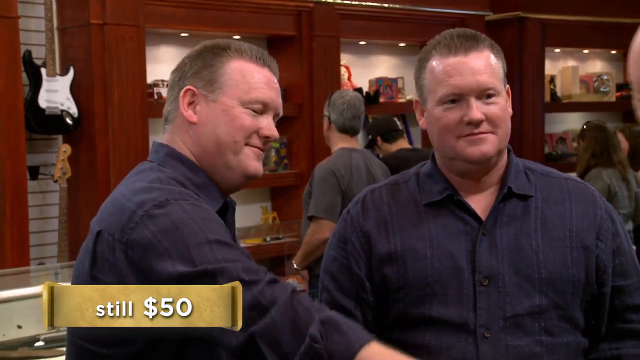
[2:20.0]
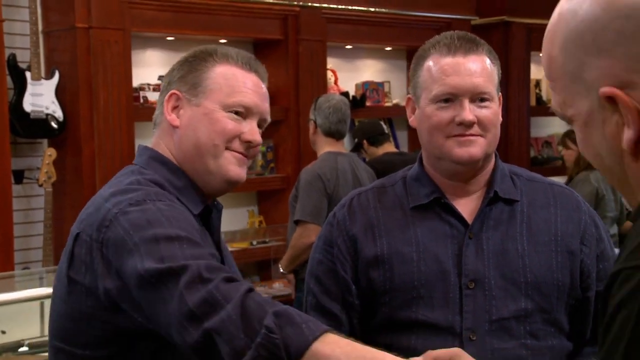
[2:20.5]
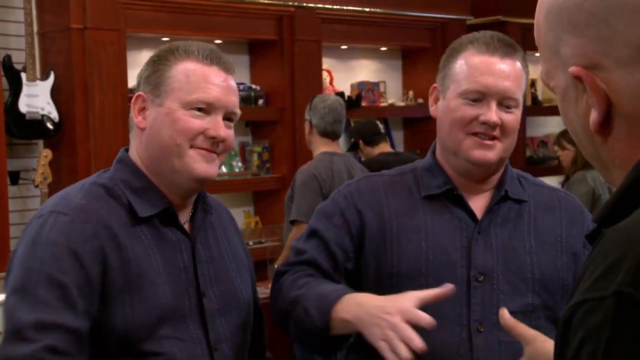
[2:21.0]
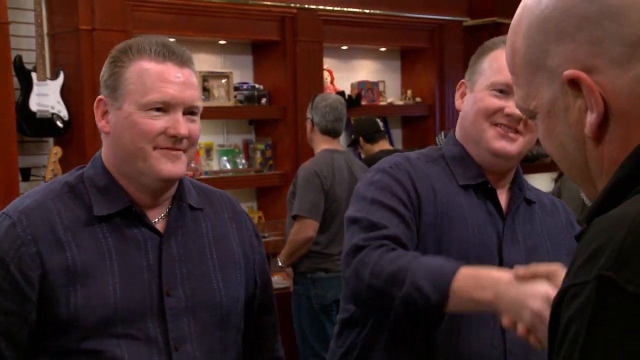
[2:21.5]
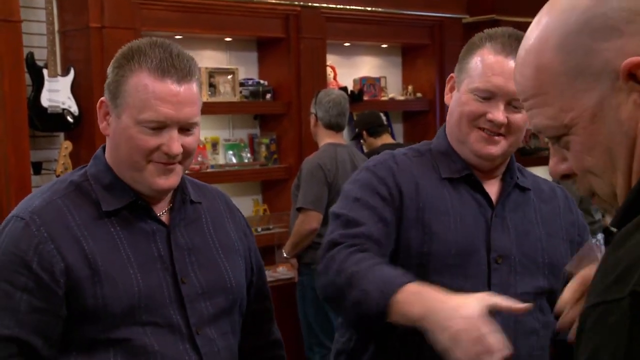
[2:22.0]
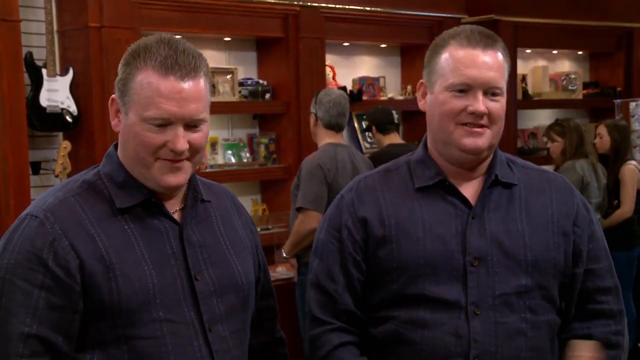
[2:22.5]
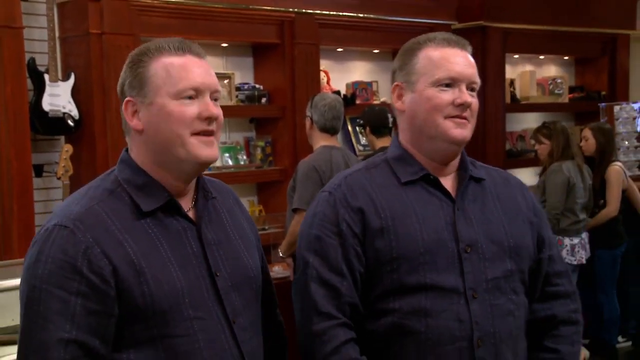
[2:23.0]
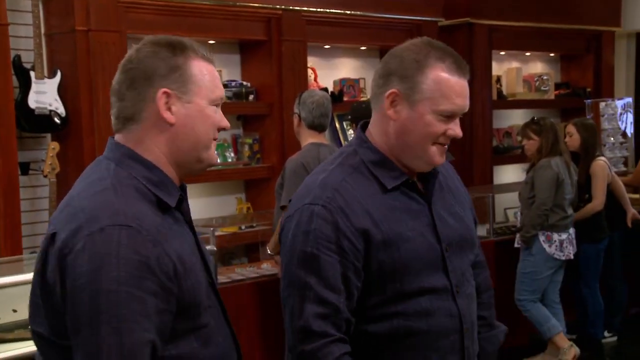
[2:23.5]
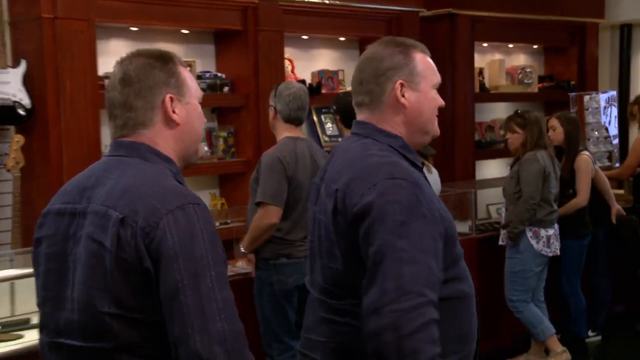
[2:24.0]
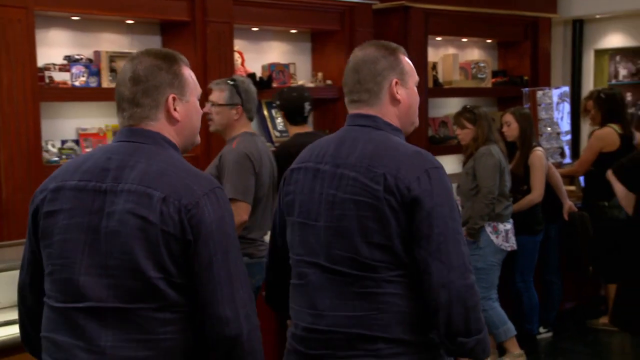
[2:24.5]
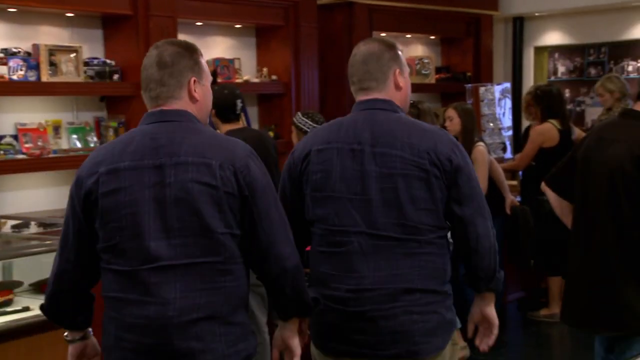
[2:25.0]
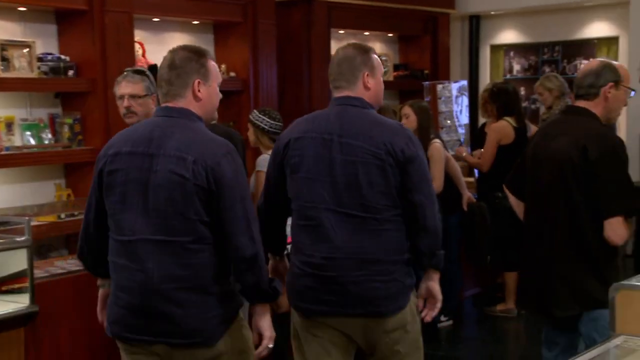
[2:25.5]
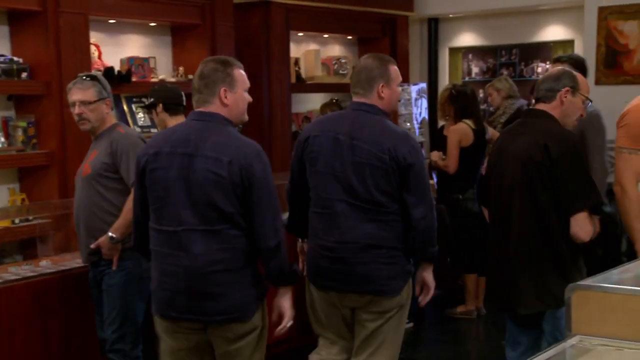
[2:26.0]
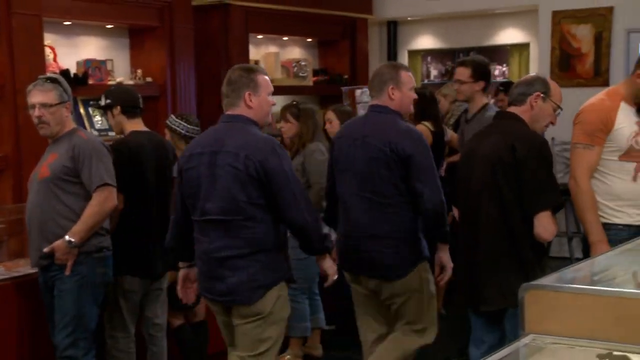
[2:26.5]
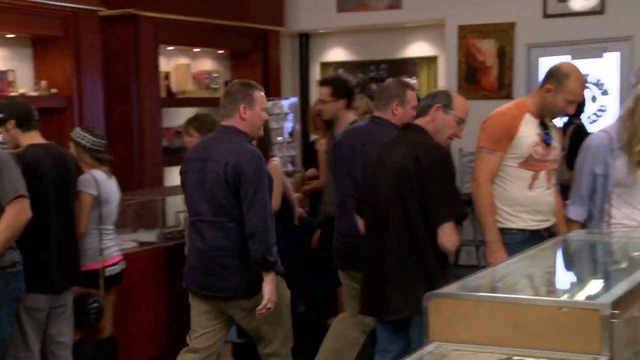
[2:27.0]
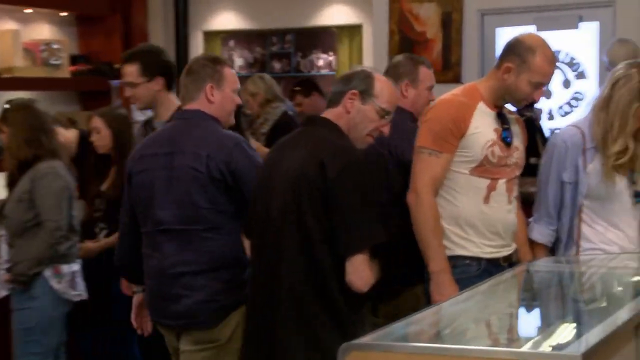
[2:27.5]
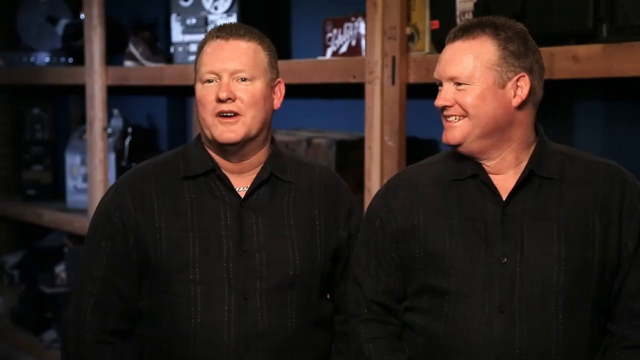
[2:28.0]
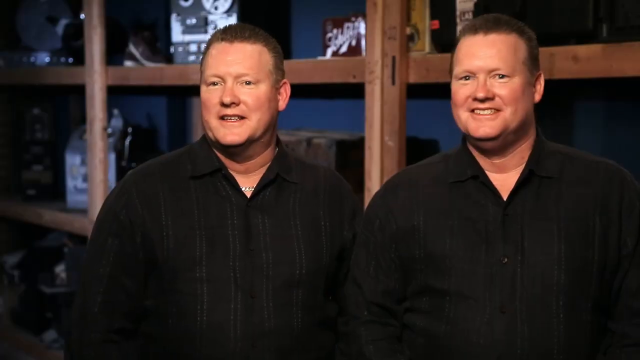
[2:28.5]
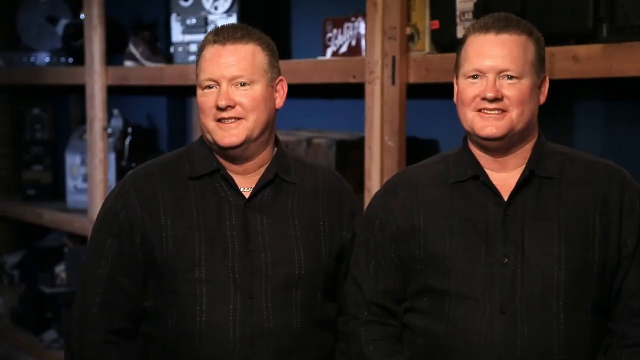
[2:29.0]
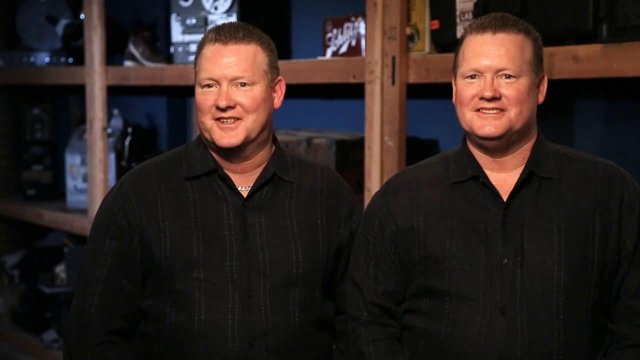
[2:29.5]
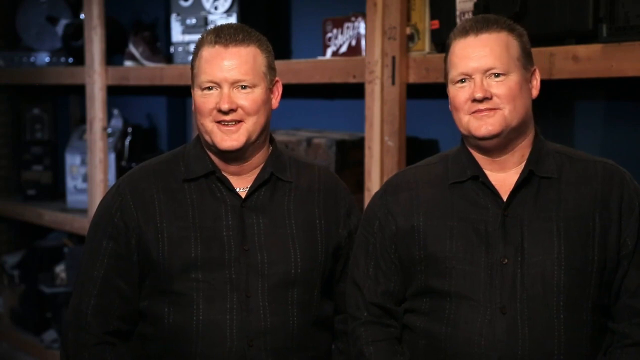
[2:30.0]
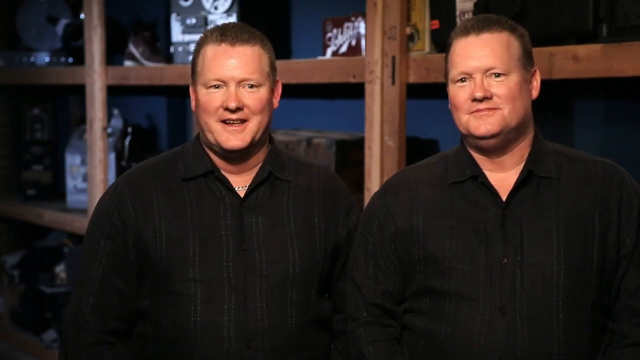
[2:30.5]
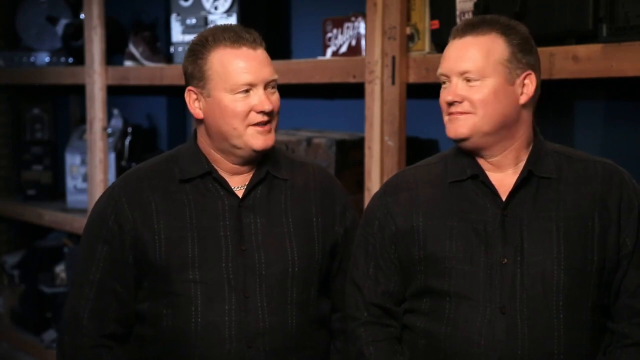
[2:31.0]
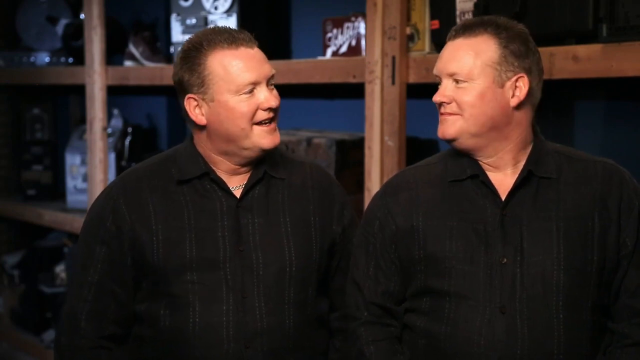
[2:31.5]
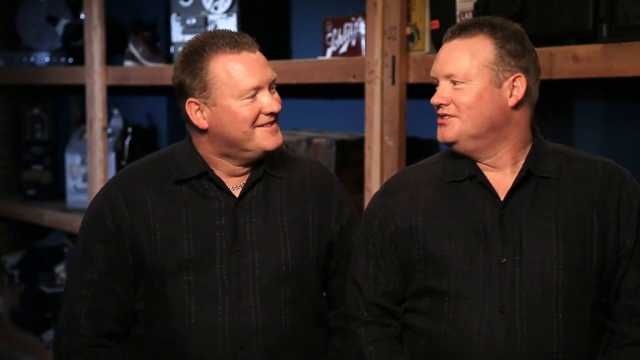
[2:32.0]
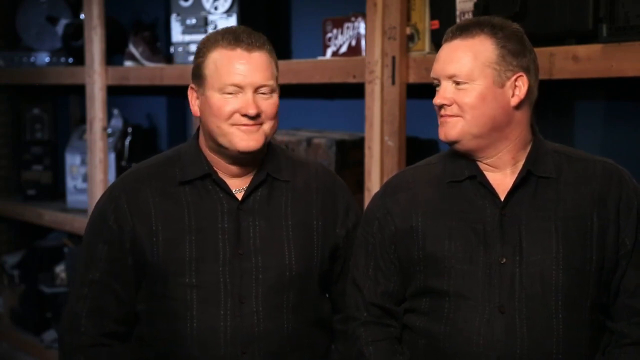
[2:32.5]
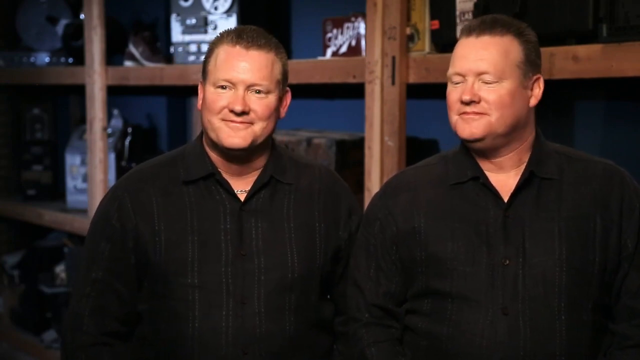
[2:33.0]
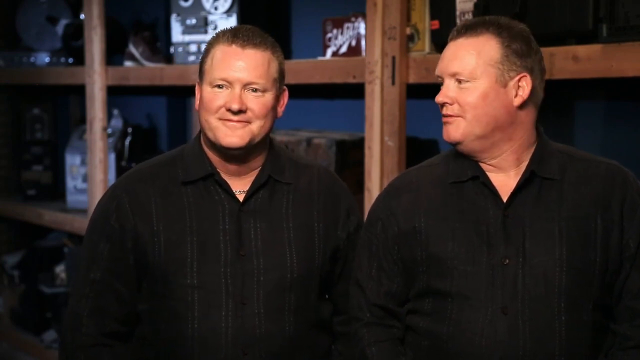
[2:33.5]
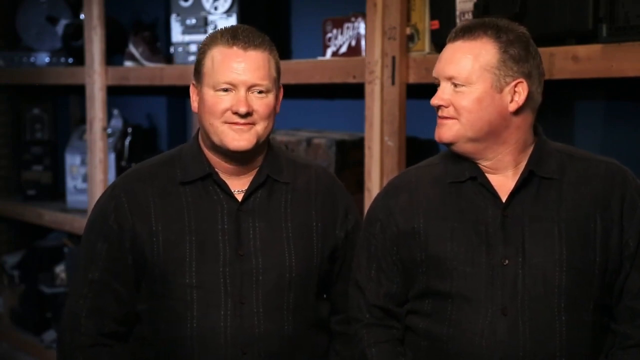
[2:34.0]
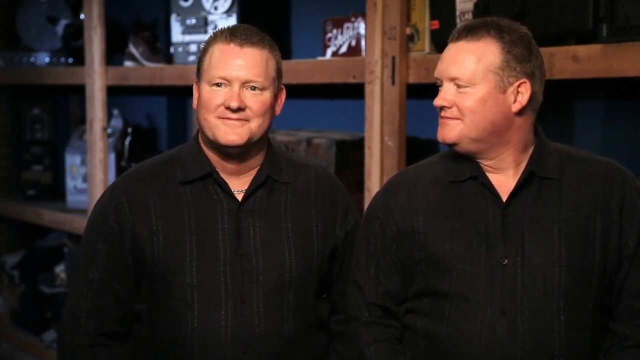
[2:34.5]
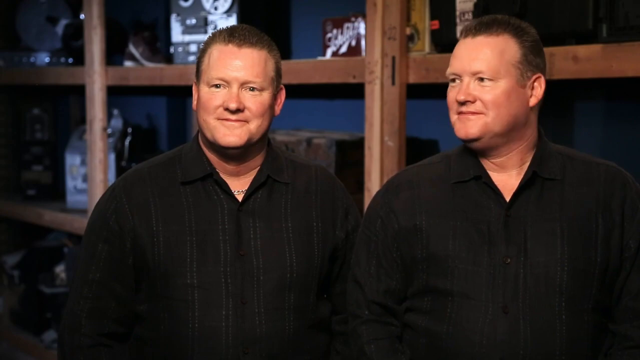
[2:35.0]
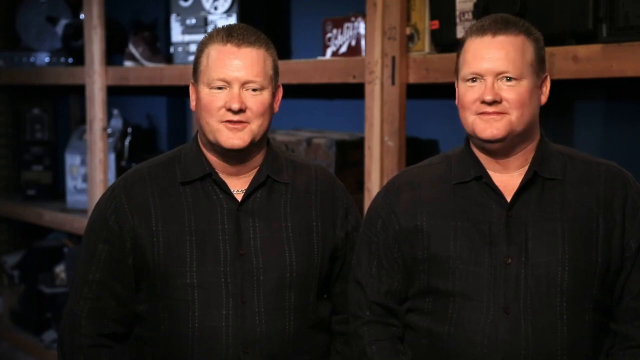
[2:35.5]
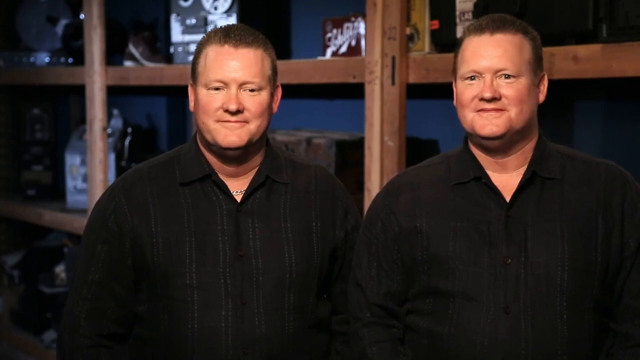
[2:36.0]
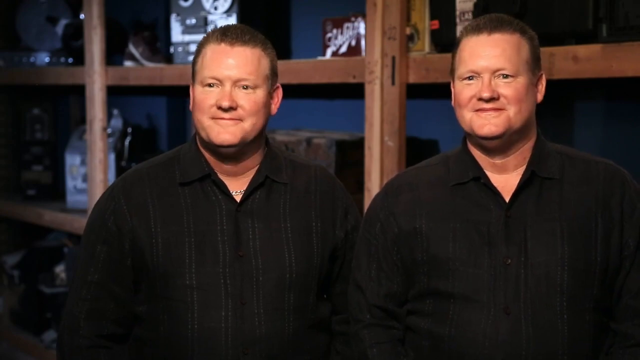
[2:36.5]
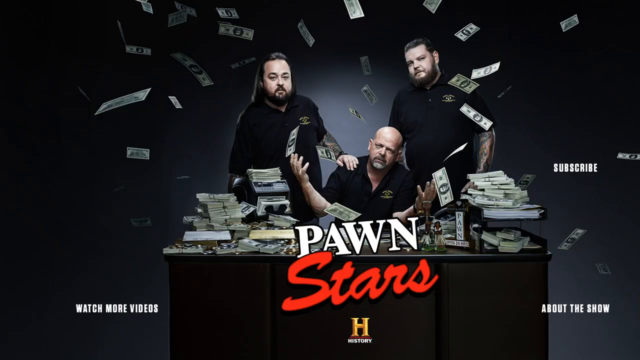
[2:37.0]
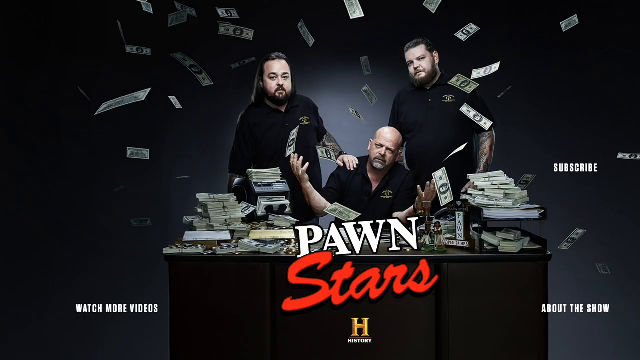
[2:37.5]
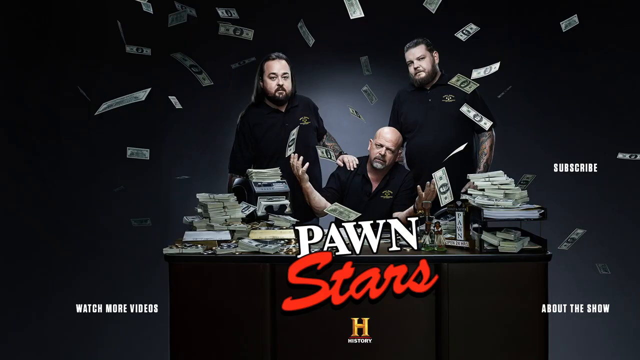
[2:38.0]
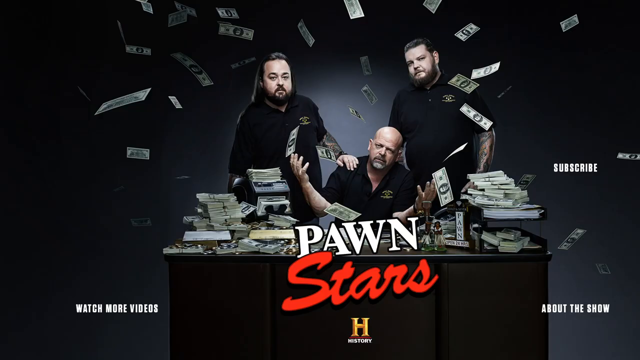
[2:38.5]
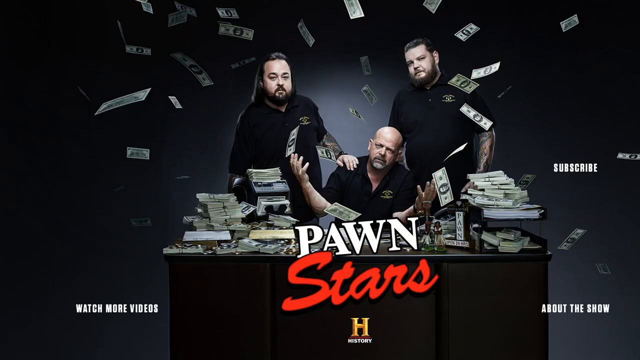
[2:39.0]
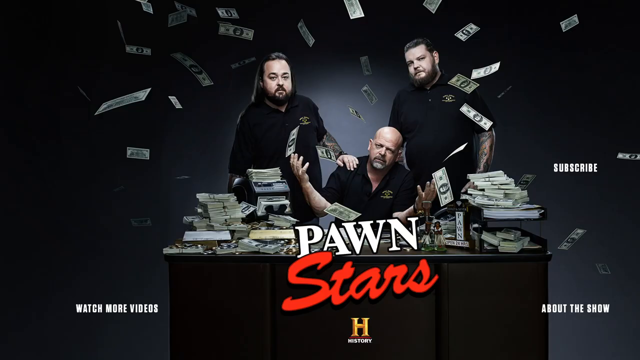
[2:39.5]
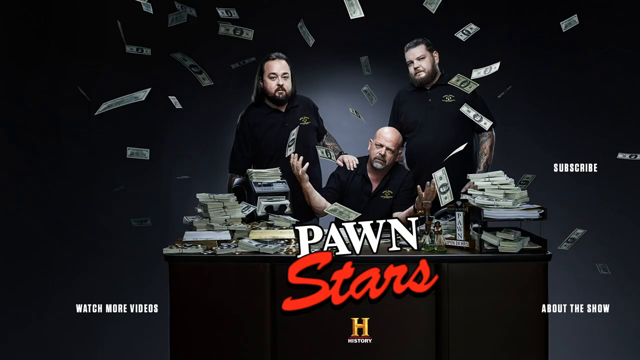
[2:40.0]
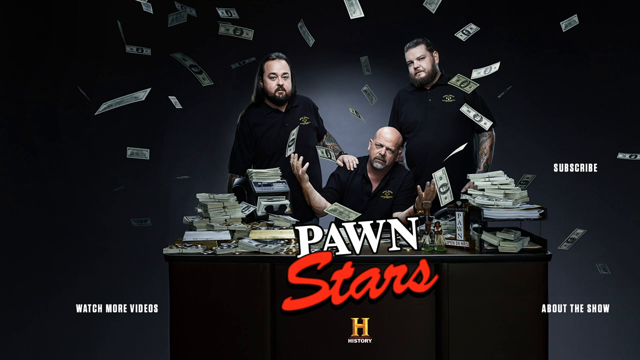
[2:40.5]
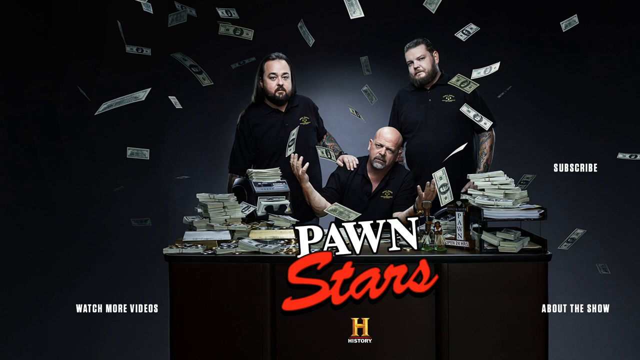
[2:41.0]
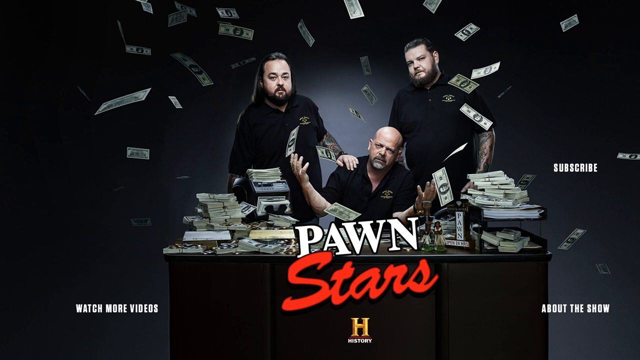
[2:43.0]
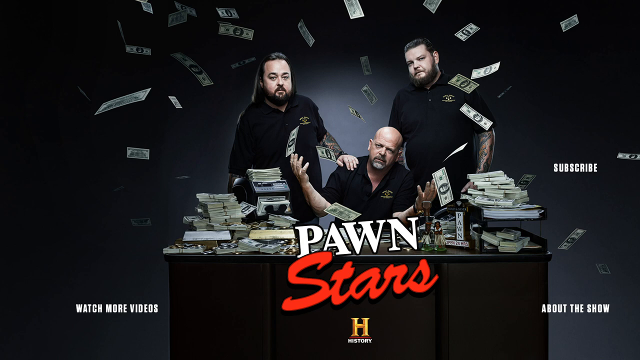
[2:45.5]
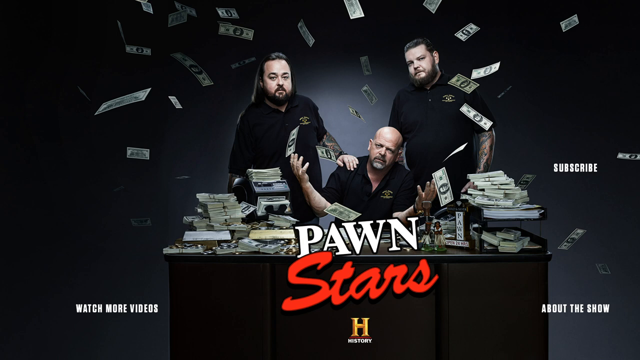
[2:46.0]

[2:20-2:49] One of the brothers shakes hands with the bald man in the short black shirt, and then the other brother shakes hands with him too. Derek and Eric both turn away and walk off without the books, in a synchronised walk, with the same hand and body movements, moving in unison. The video cuts to Derek and Eric being interviewed in the same location seen earlier, not the shop: it is darkly lit, with a wooden storage unit behind them, a blue painted wall behind that, and what look like oil canisters and other things, so it looks like a garage or some sort of storage place. They look at each other as they talk, with very similar mannerisms and gestures. The video ends on a still that says "Pawn Stars", apparently showing the man in the short black shirt with his bald head sitting in the middle with lots of money flying around, surrounded by two people not otherwise seen in the video.